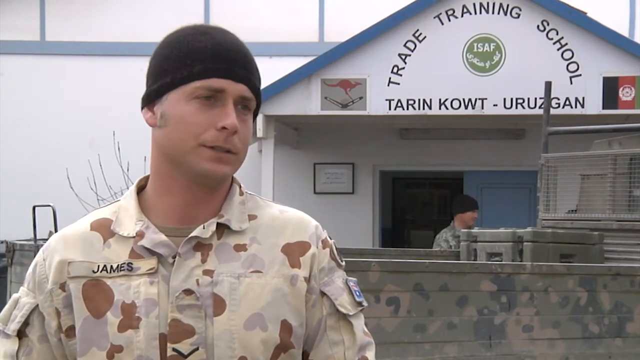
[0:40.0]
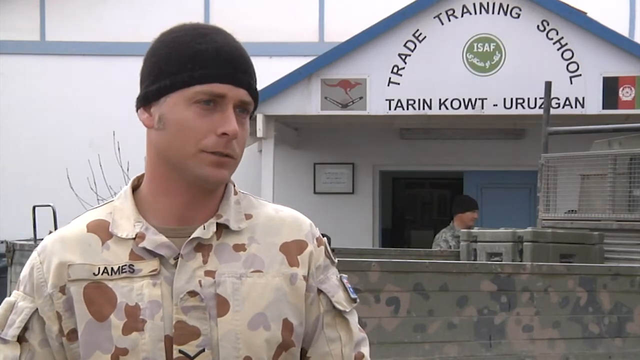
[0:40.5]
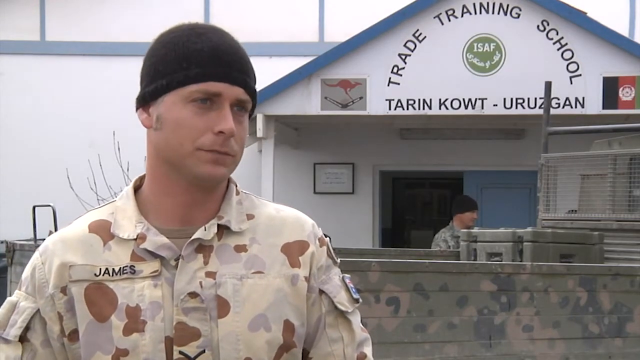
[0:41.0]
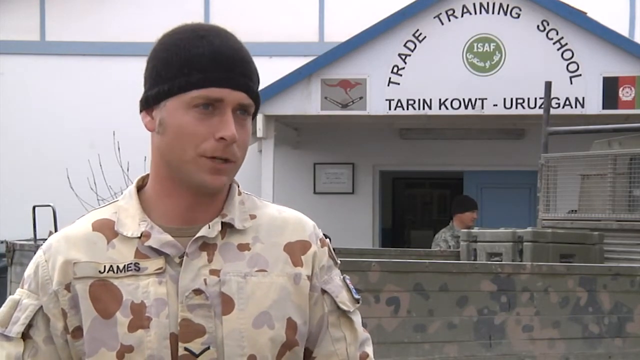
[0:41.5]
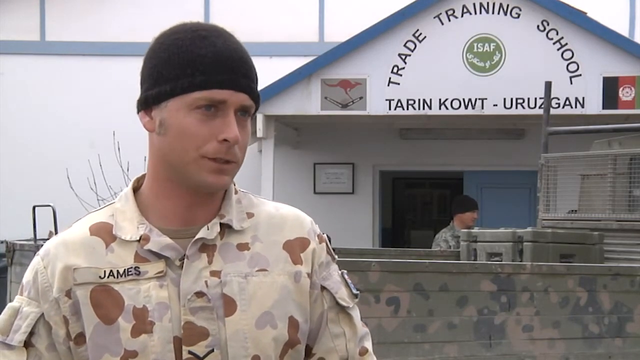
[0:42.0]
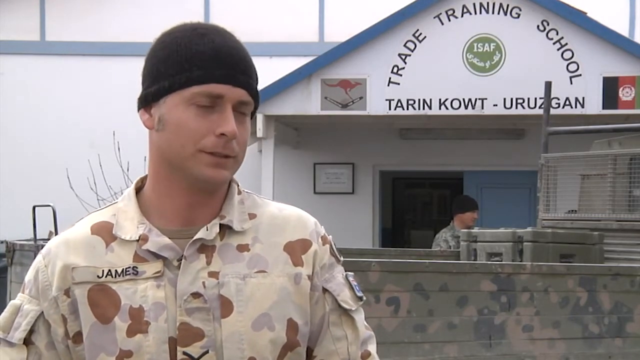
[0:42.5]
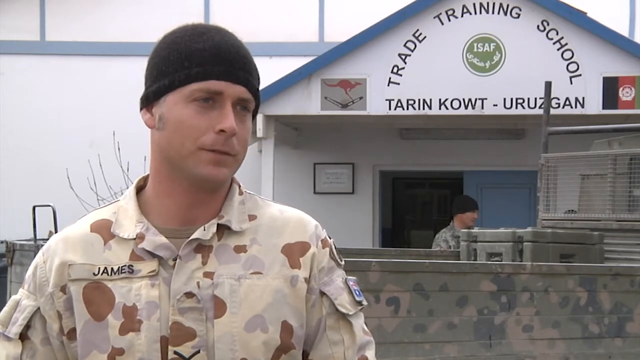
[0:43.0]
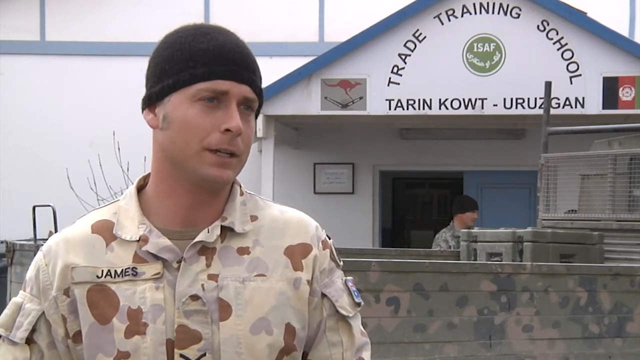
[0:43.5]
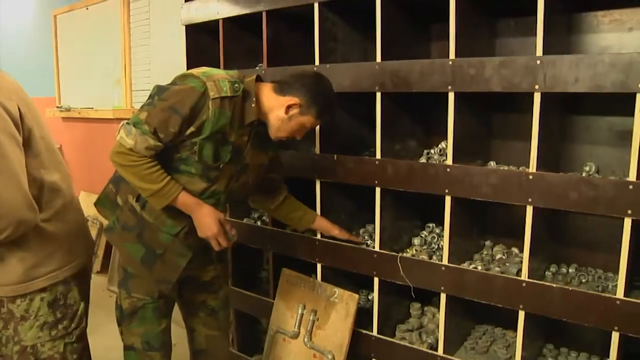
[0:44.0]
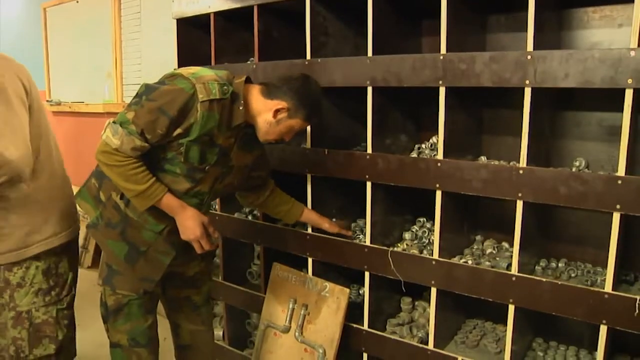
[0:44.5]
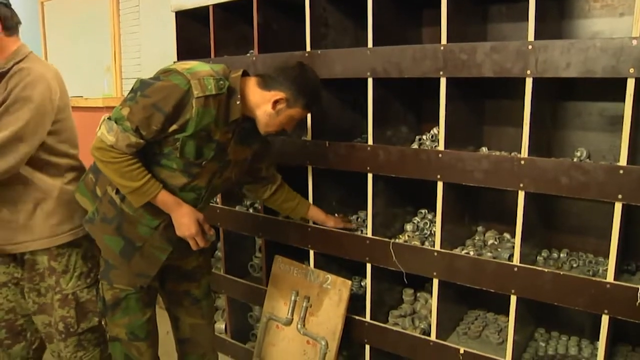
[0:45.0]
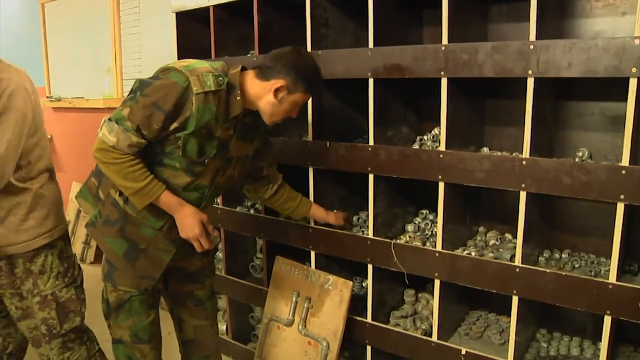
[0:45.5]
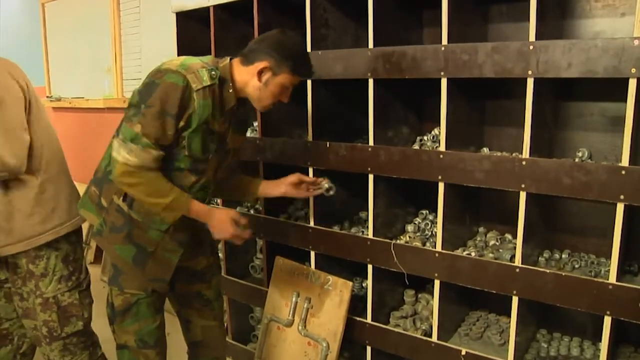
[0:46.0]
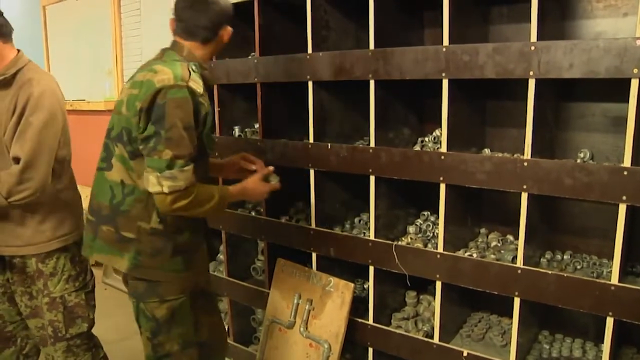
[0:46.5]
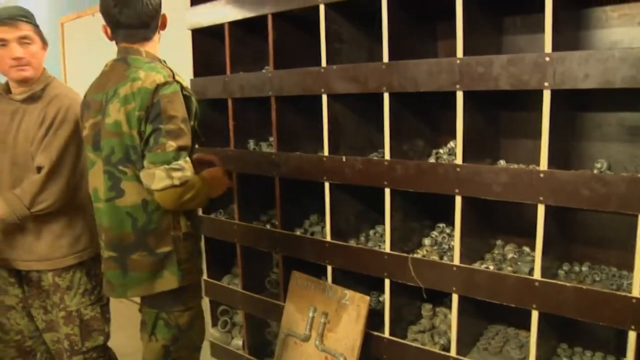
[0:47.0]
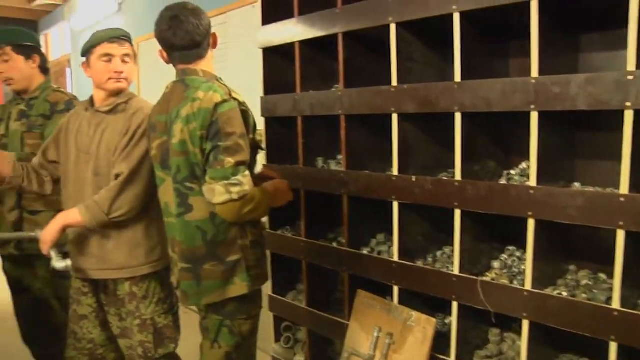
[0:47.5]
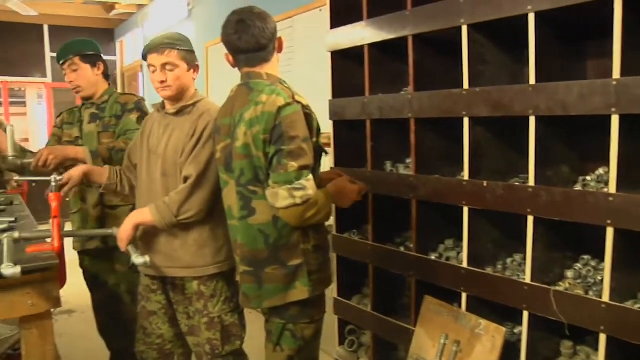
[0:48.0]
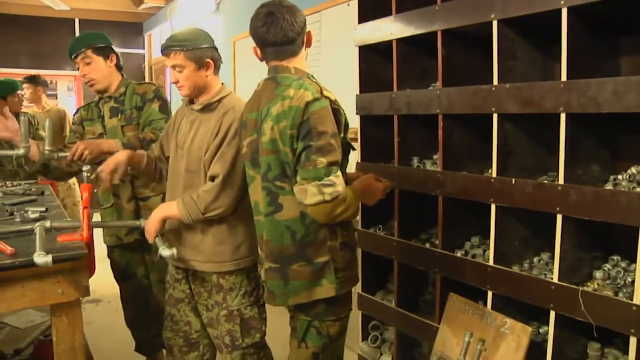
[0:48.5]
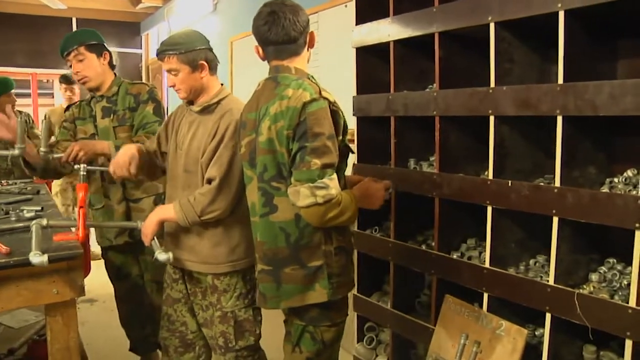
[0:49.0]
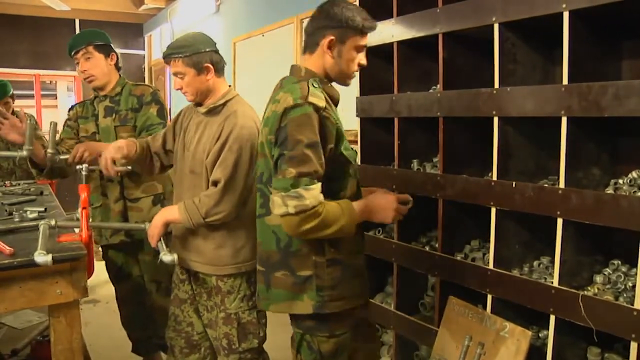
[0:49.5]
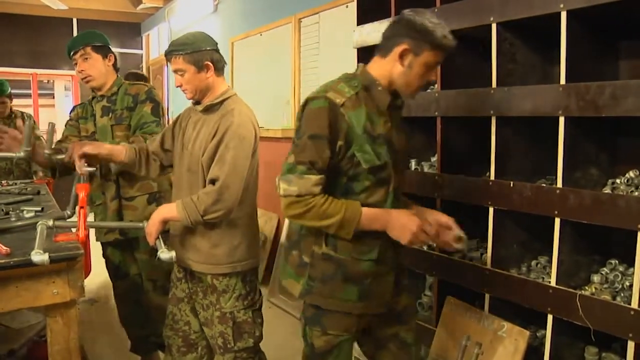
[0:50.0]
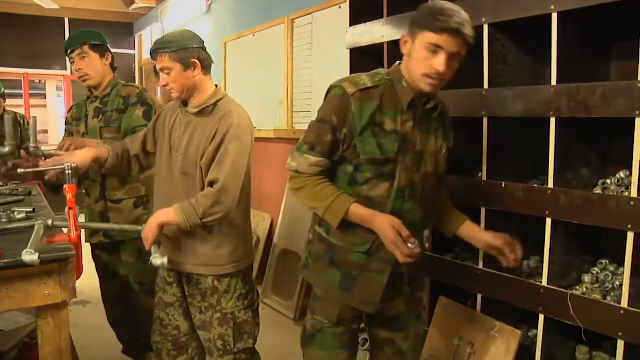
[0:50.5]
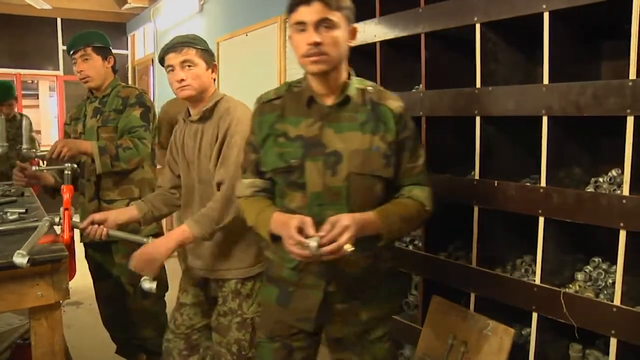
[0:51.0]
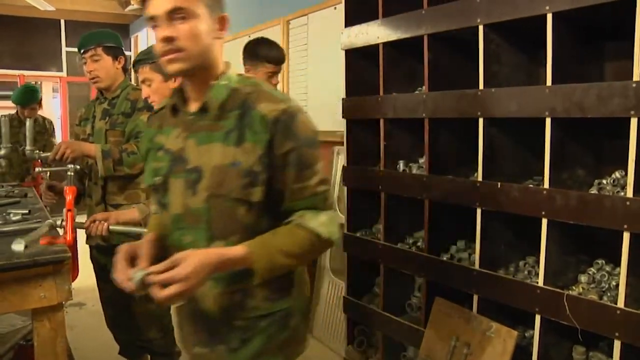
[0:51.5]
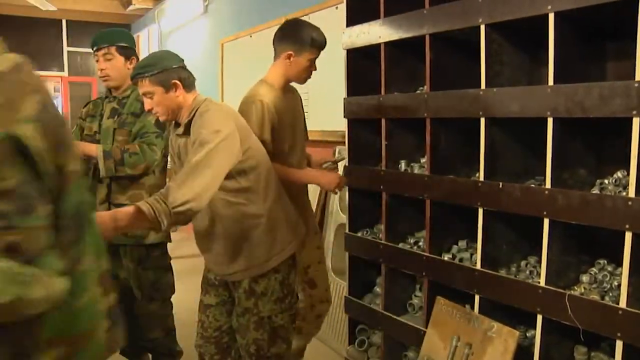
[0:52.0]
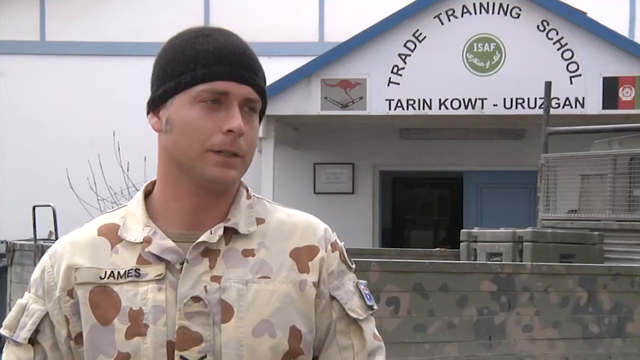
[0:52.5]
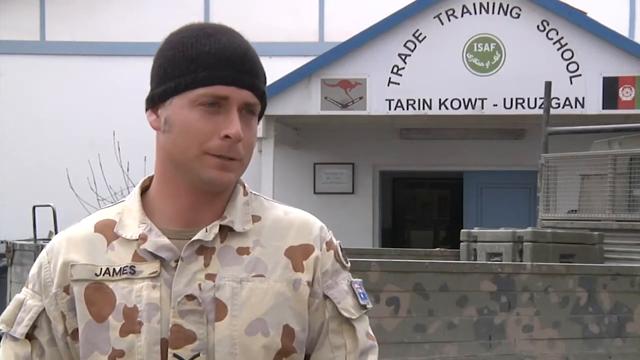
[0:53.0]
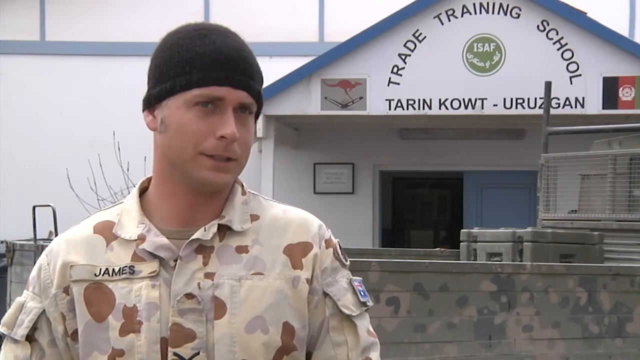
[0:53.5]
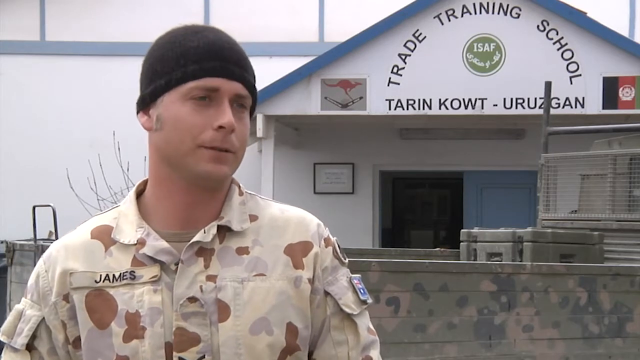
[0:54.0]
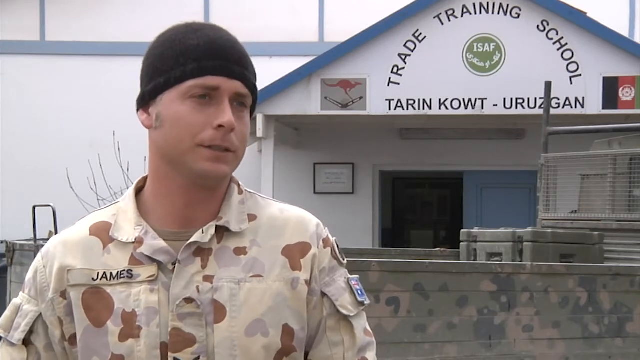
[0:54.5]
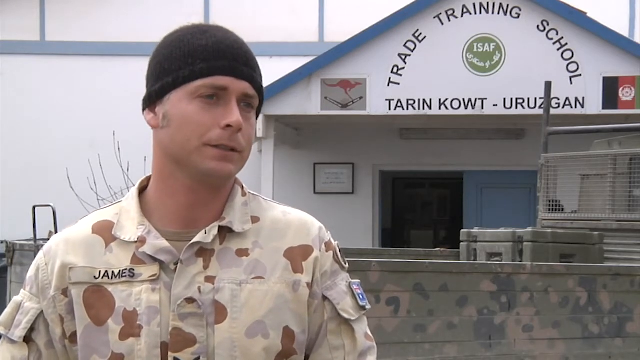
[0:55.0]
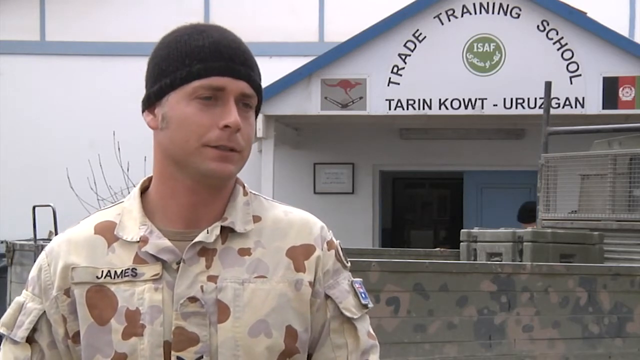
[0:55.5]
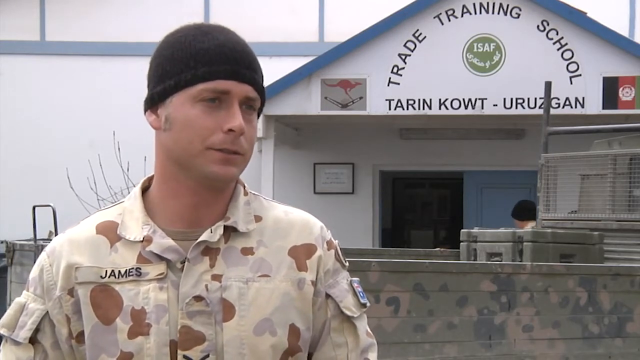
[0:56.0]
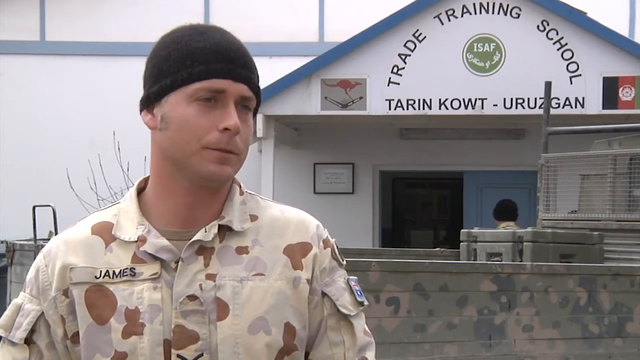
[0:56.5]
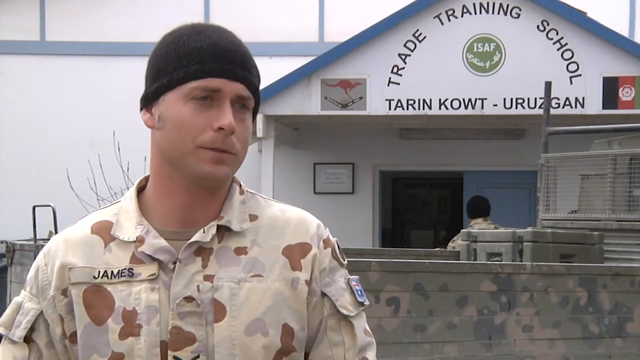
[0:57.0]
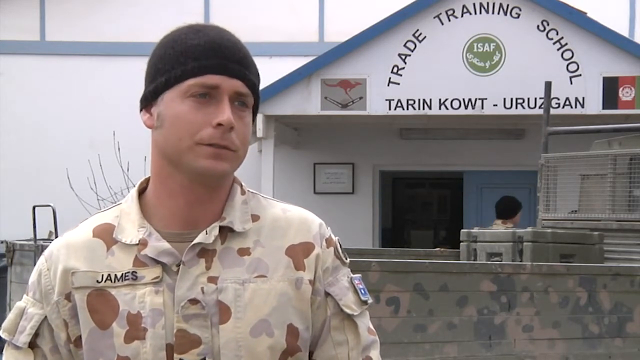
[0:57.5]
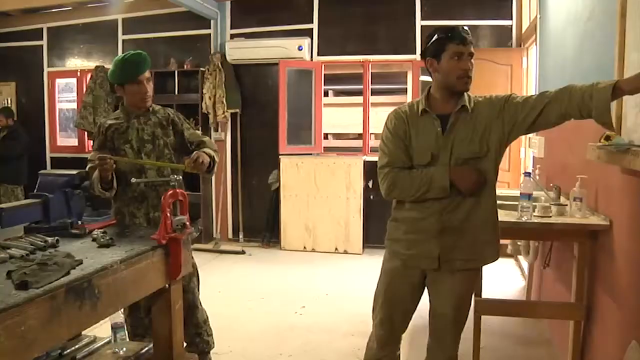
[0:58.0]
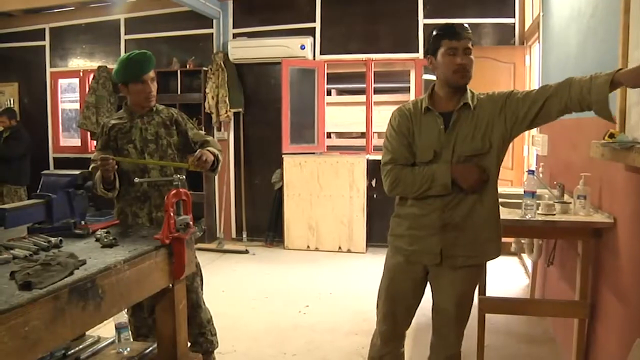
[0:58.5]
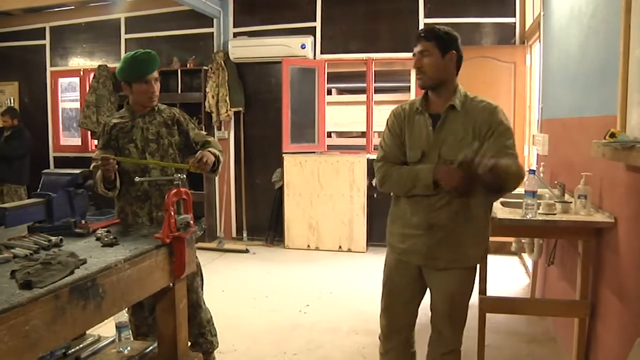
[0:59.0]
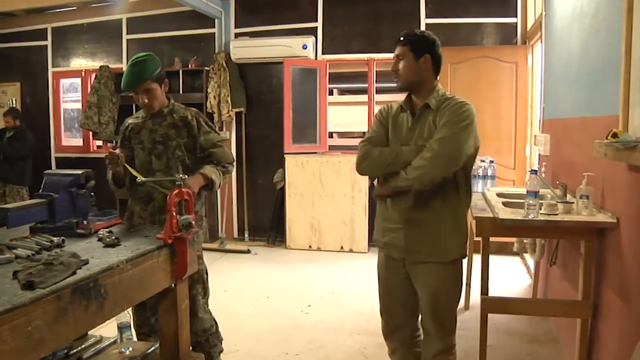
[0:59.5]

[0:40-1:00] A man with a name tag reading "James" wears desert camouflage and a black beanie. Behind him is a white painted building that reads "Trade Training School Tarin Kaut Erisgan." He talks toward someone on the right, giving an interview. The footage cuts to a soldier in green camouflage pulling a pipe fitting out of a cubby; there are multiple cubbies on the wall, all made of the same brown wood. He pulls out a single coupling with his left hand, then clenches it with his right hand, checking that it is what he is looking for. He turns to his left and talks to a man behind him as the camera slowly pans toward that man, who is attaching a large plumbing pipe assembly to a red clamp attached to a workbench. The first man then turns back to the cubbies filled with couplings, throws the coupling back into the cubby, and turns around.